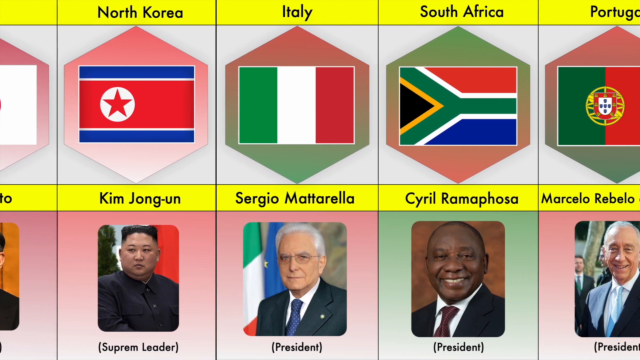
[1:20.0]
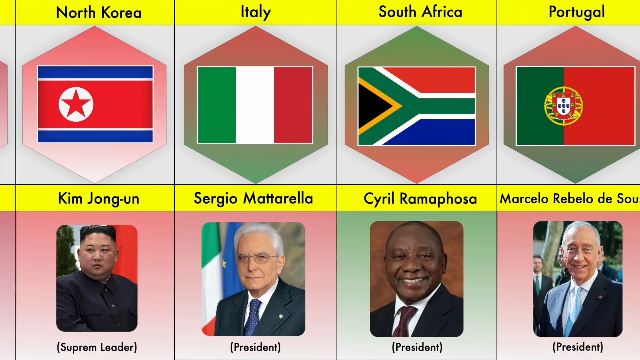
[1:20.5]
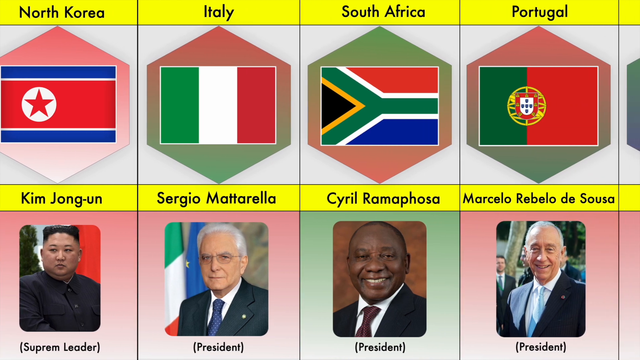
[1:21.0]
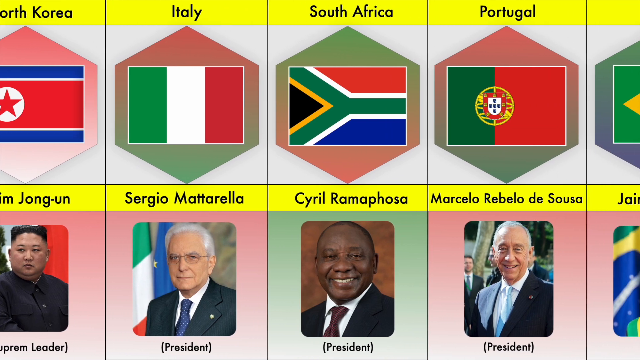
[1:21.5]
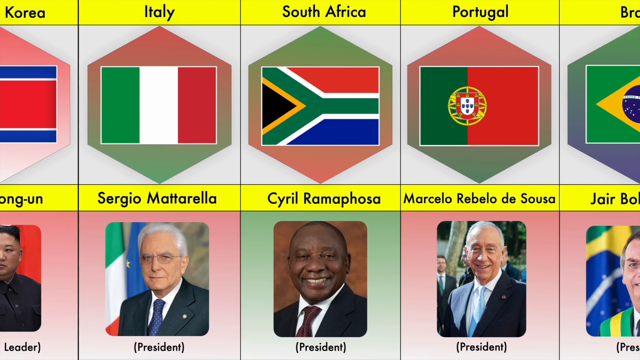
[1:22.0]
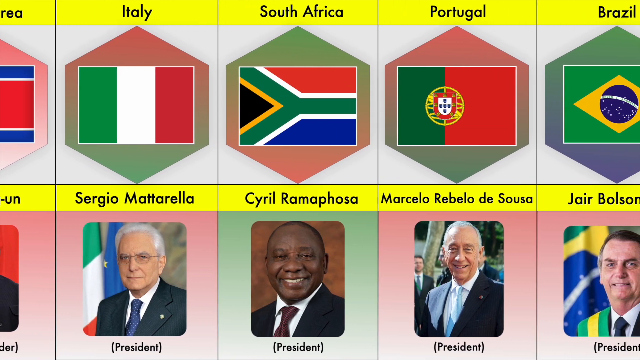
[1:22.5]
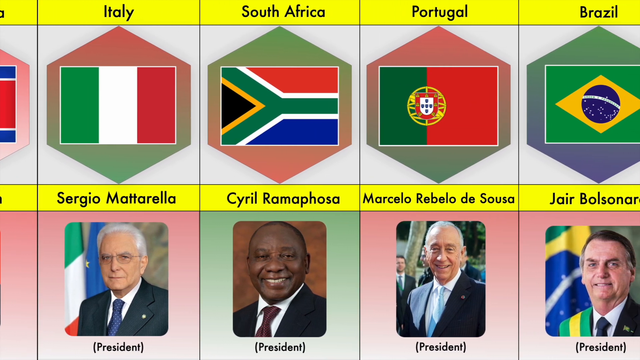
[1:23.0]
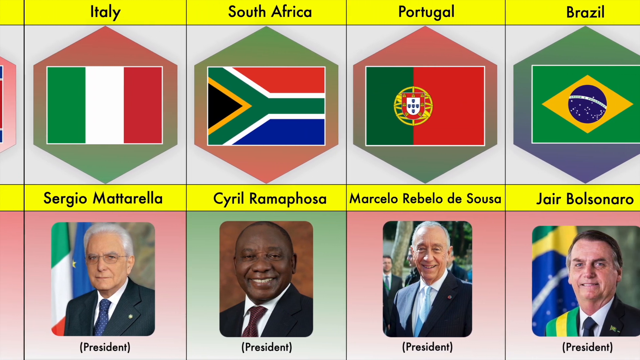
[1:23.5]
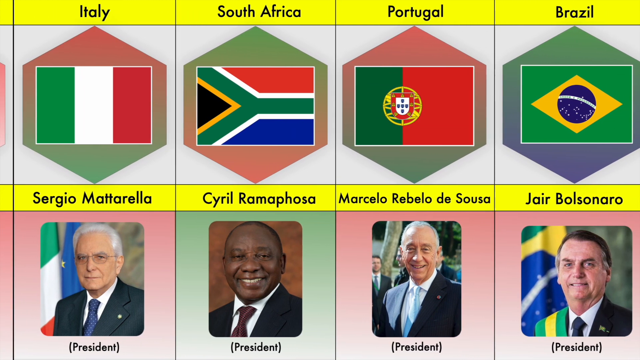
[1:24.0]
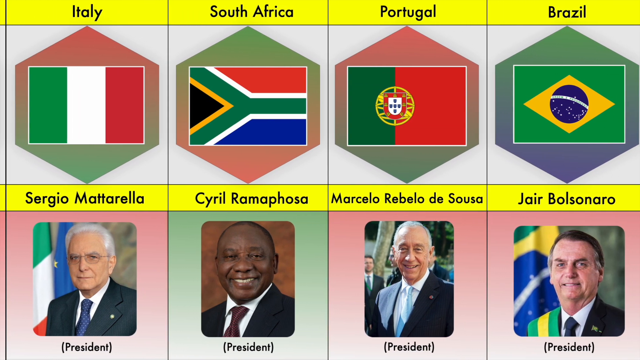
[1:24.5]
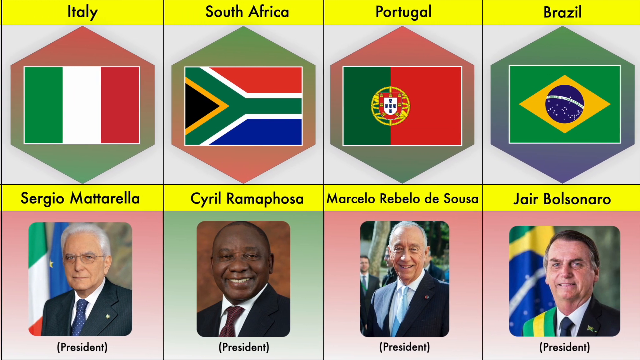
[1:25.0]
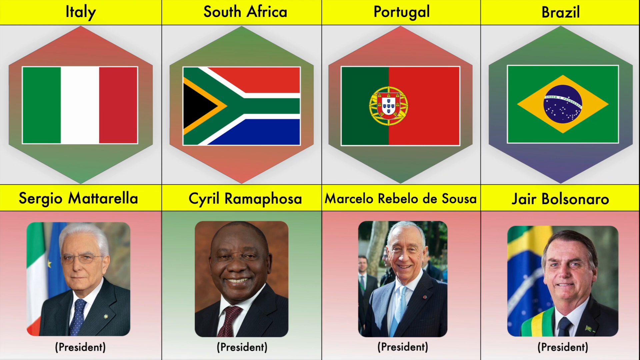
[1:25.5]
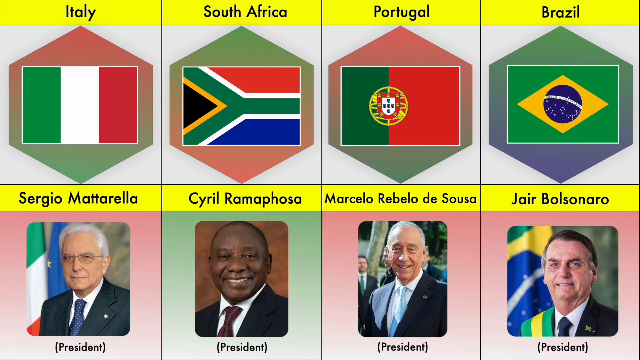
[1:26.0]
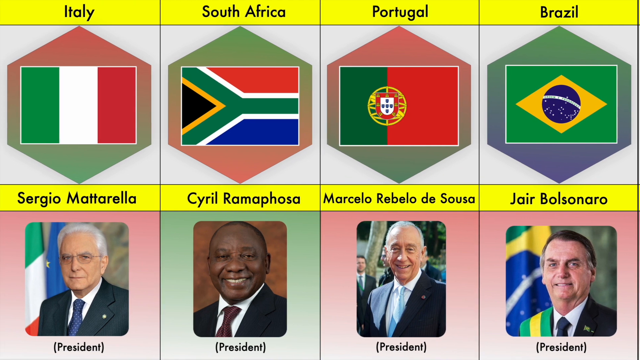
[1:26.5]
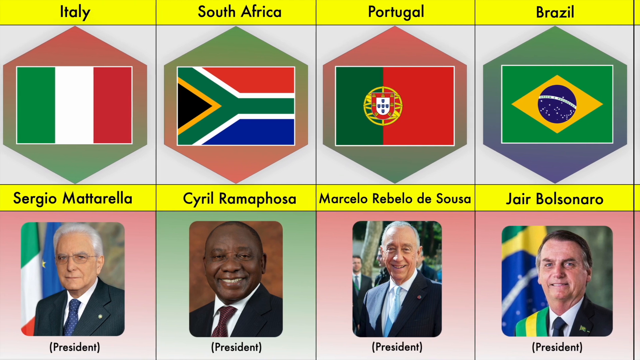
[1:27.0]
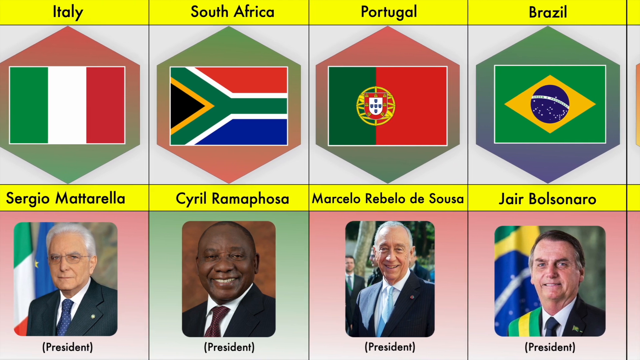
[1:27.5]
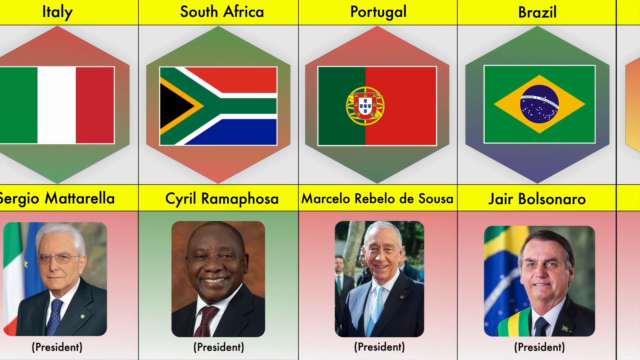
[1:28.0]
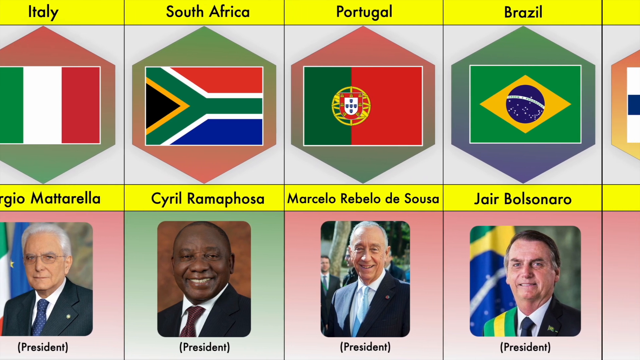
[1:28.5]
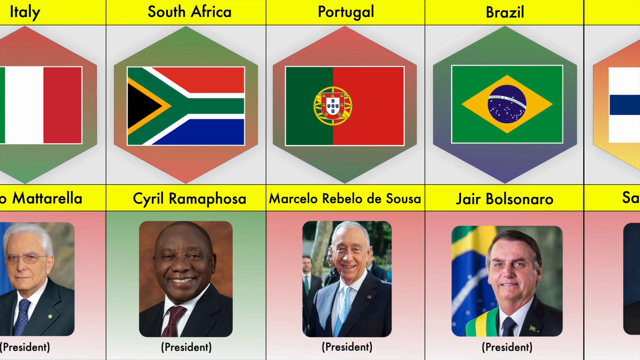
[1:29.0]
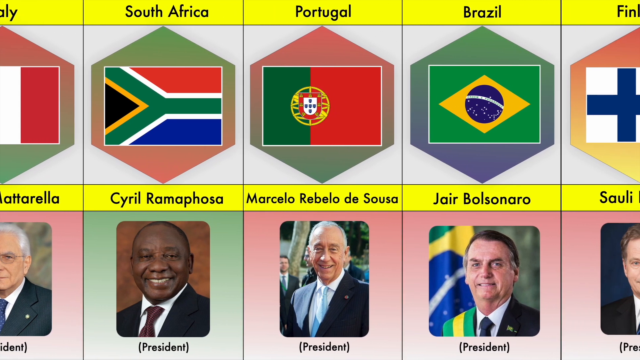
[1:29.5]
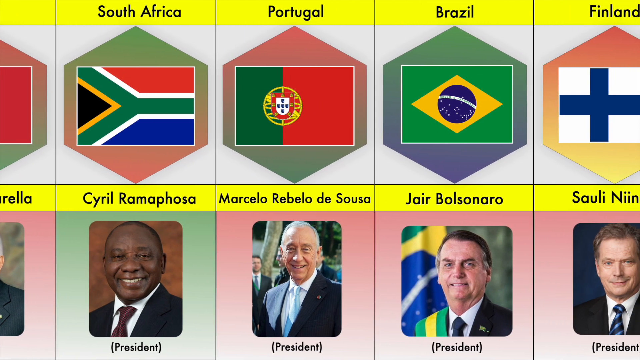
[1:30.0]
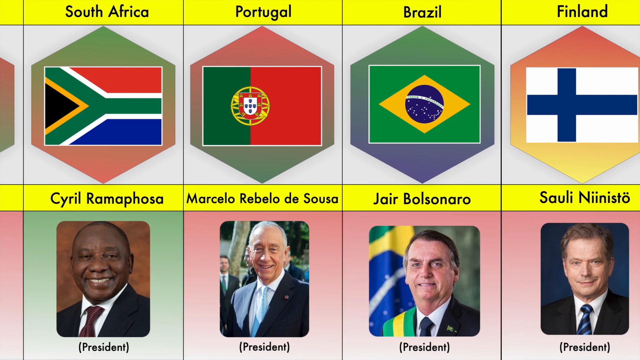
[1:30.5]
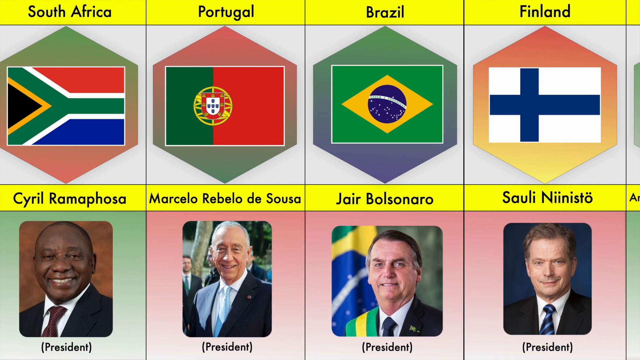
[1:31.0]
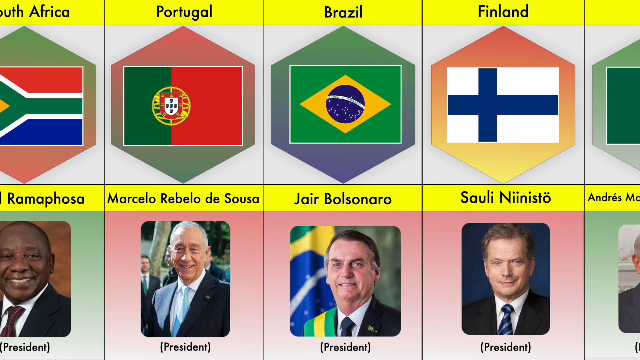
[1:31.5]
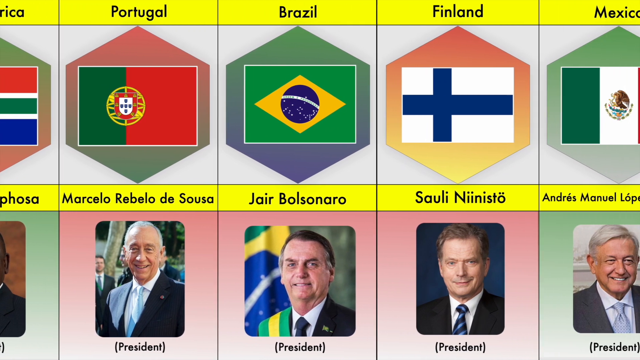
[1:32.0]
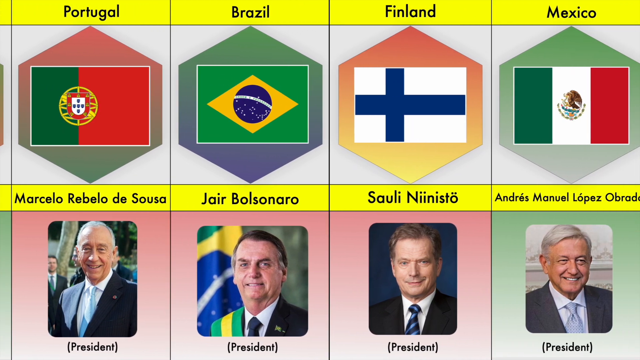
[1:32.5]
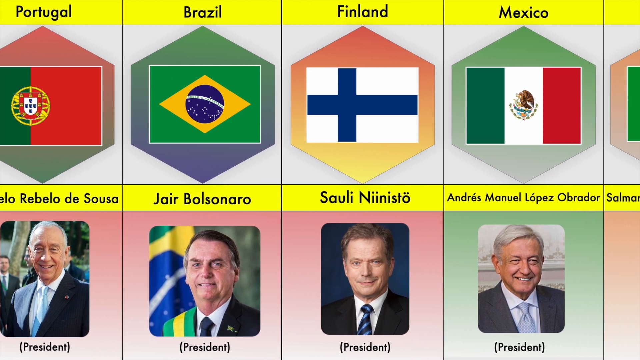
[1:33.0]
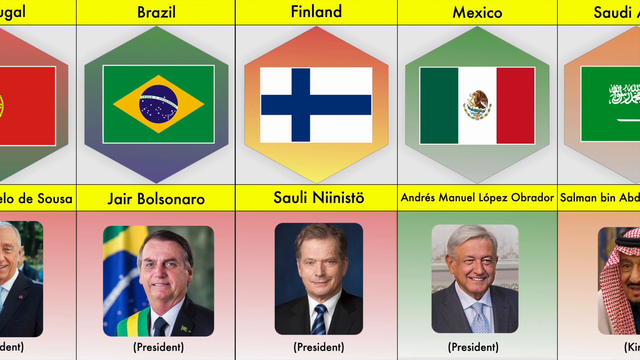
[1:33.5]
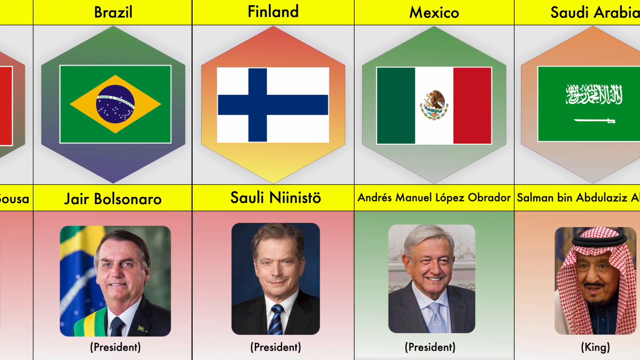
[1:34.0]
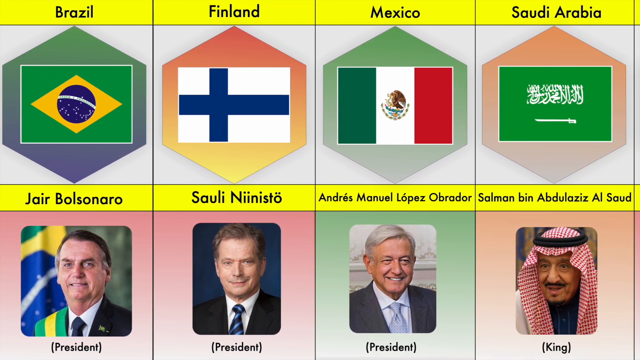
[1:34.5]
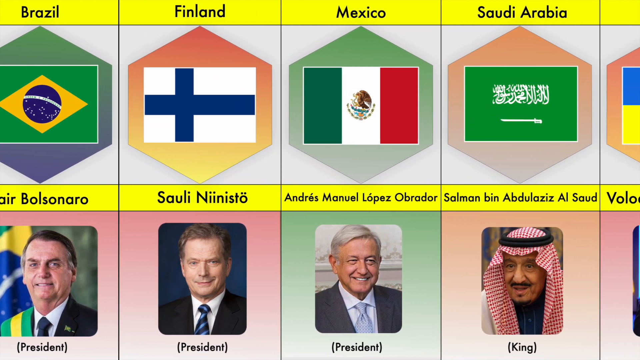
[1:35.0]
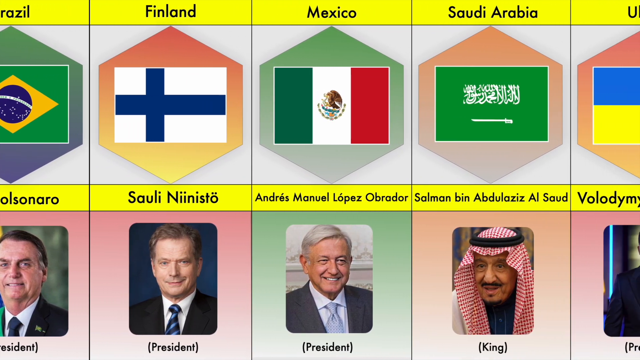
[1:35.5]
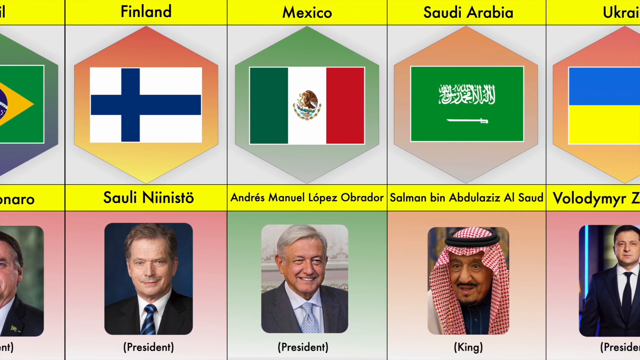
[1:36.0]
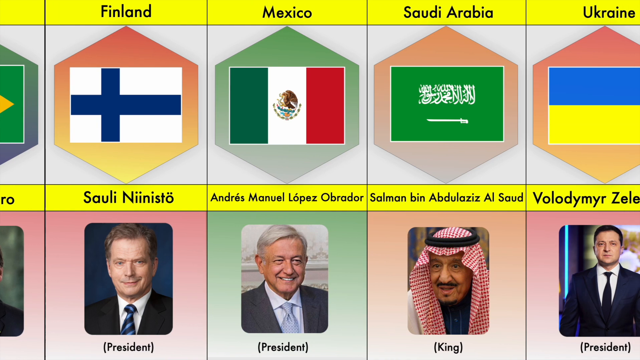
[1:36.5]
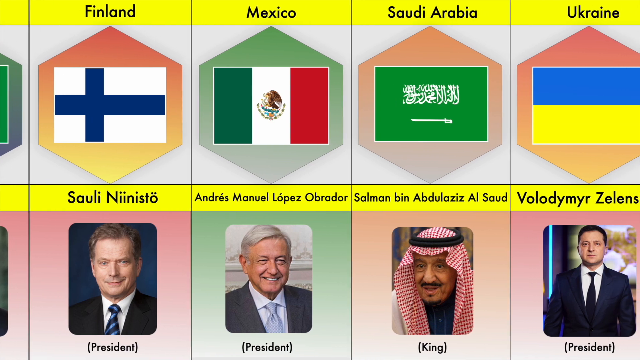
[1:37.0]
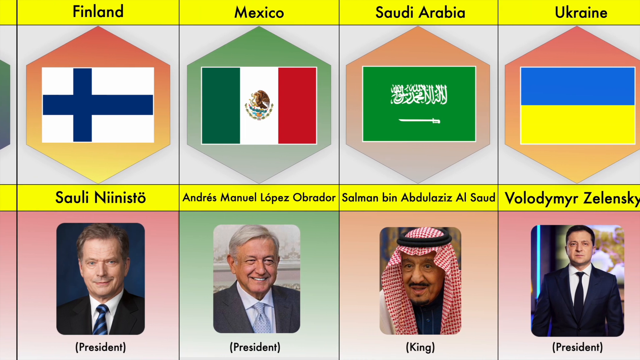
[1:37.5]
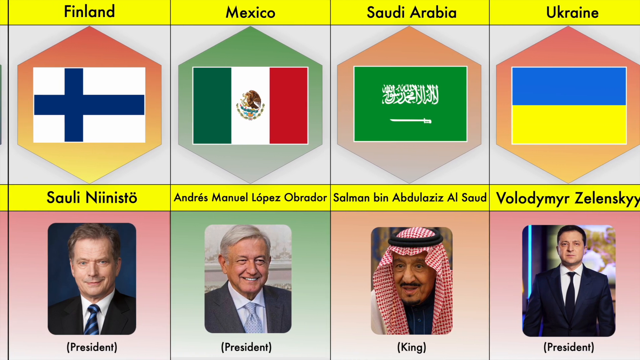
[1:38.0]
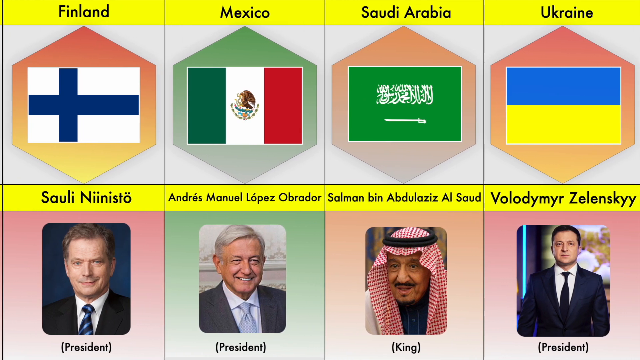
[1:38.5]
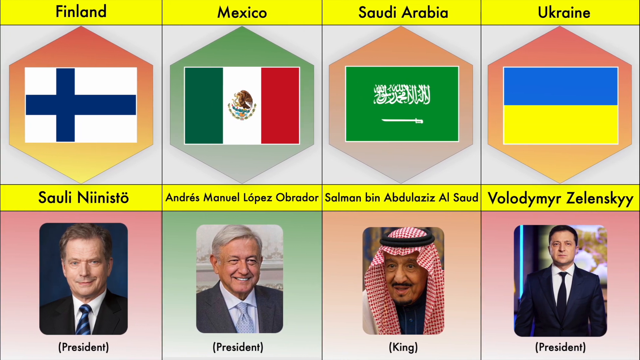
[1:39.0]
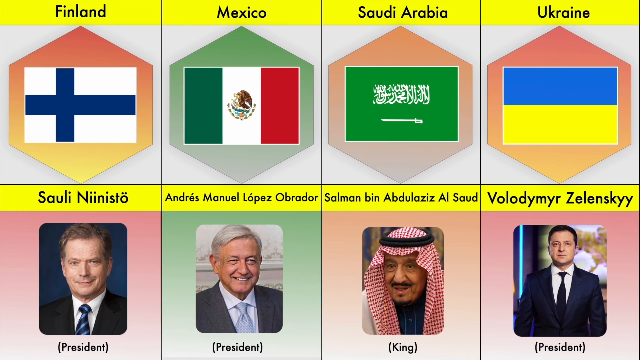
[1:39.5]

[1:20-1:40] Leaders of various countries are shown at the bottom of the screen, with the flags they represent at the top. One example is a leader of Saudi Arabia. Another is Kim Jong-un of North Korea, who has the unique title of supreme leader, which no one else has; the other people are labeled as president. The titles and countries are written in English.